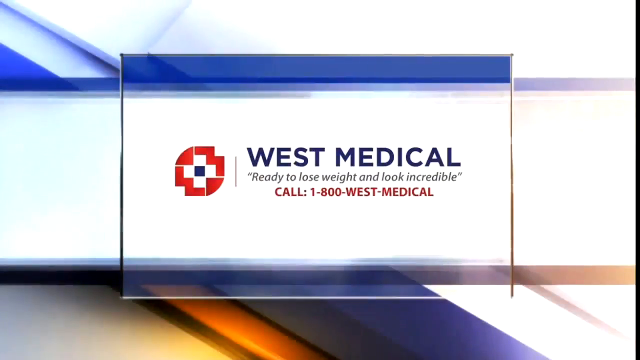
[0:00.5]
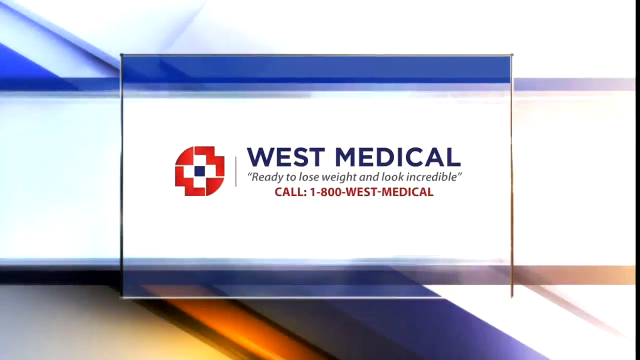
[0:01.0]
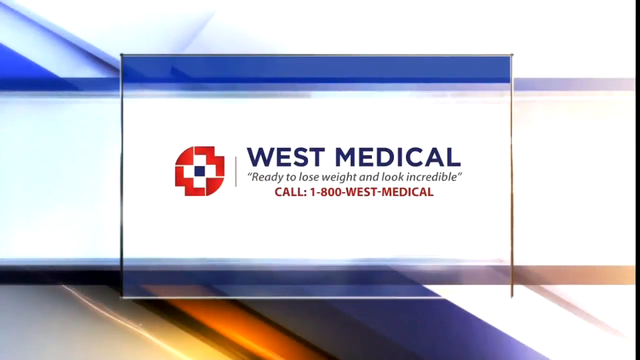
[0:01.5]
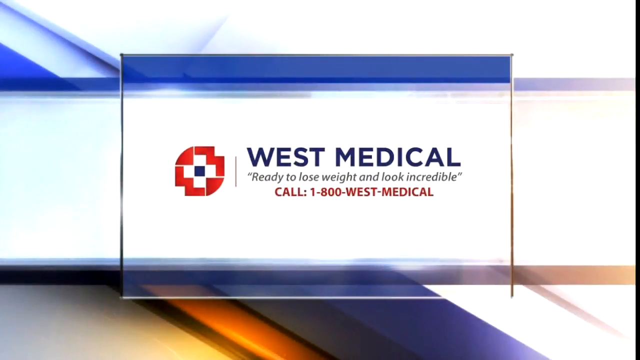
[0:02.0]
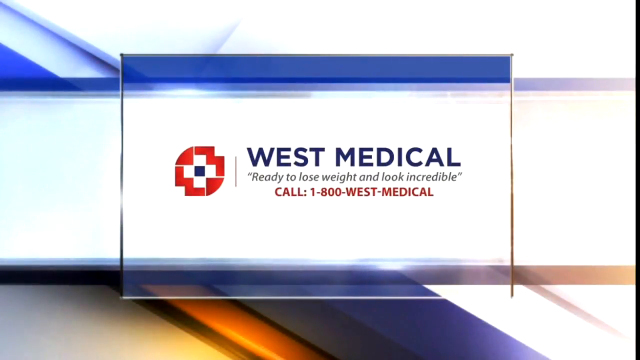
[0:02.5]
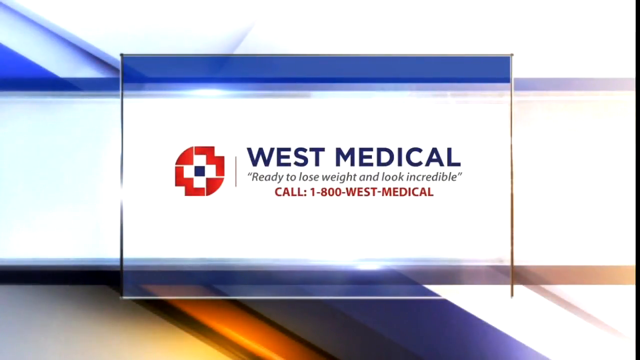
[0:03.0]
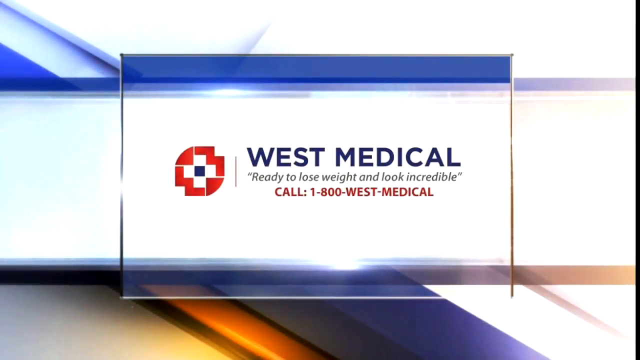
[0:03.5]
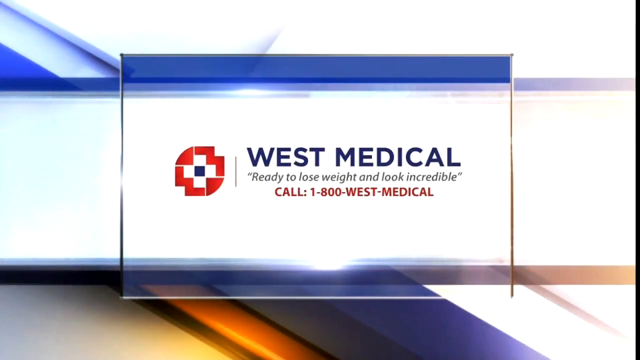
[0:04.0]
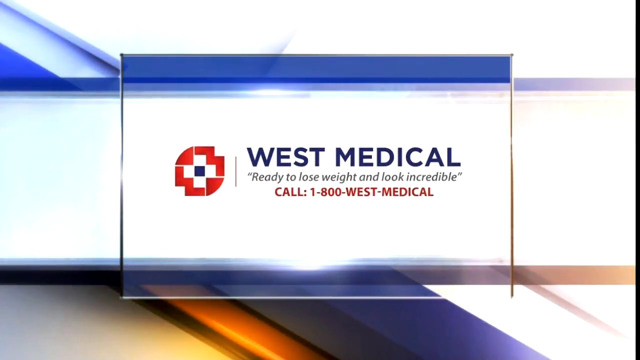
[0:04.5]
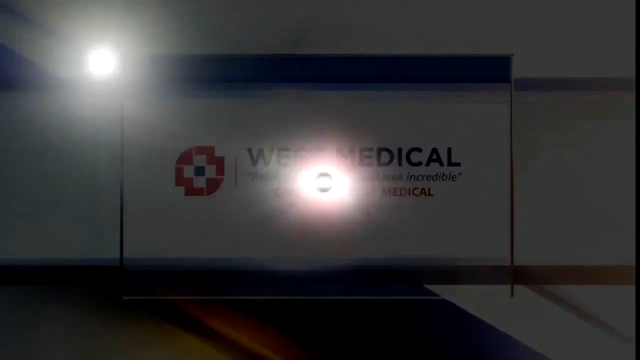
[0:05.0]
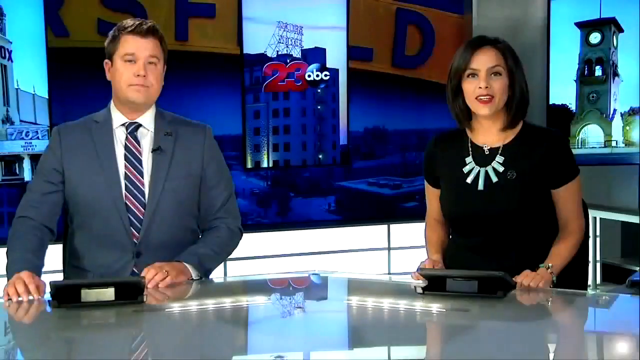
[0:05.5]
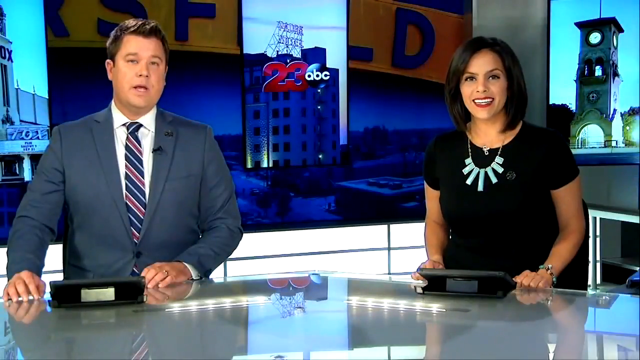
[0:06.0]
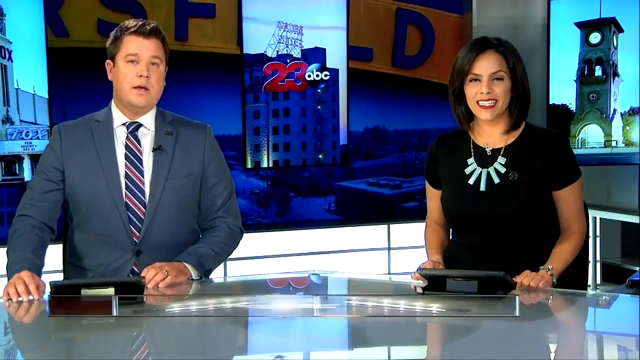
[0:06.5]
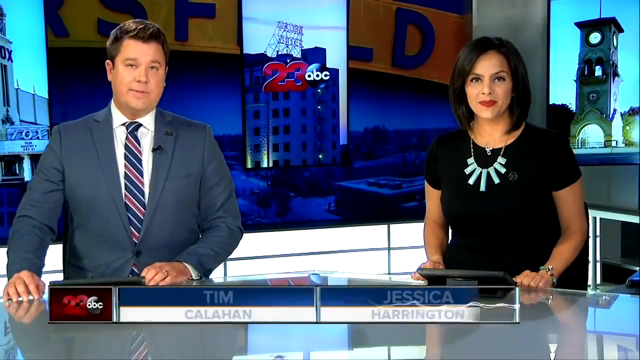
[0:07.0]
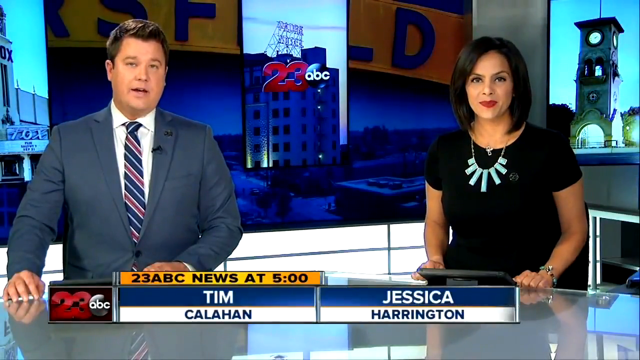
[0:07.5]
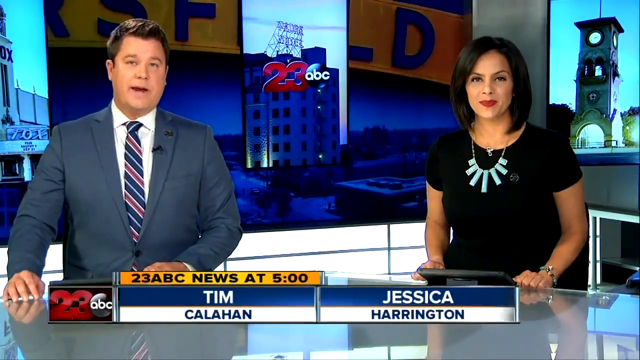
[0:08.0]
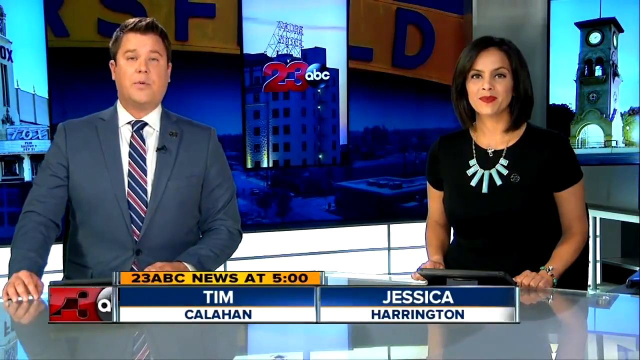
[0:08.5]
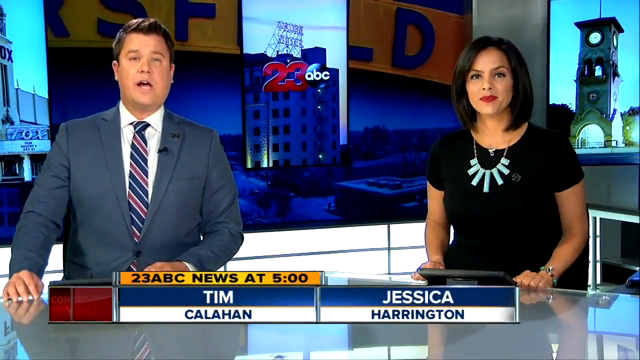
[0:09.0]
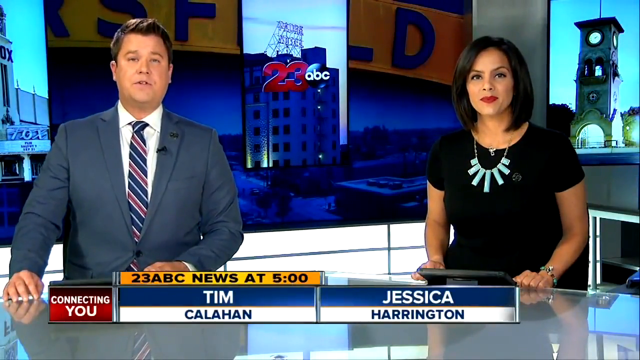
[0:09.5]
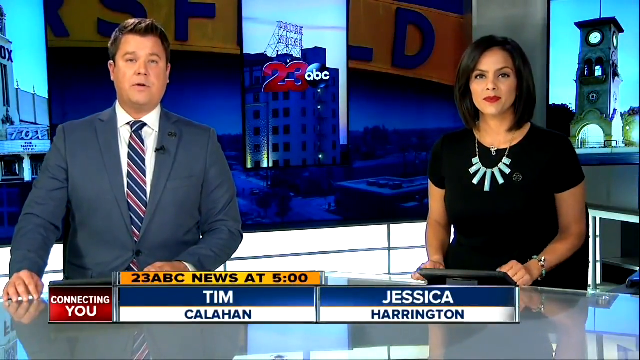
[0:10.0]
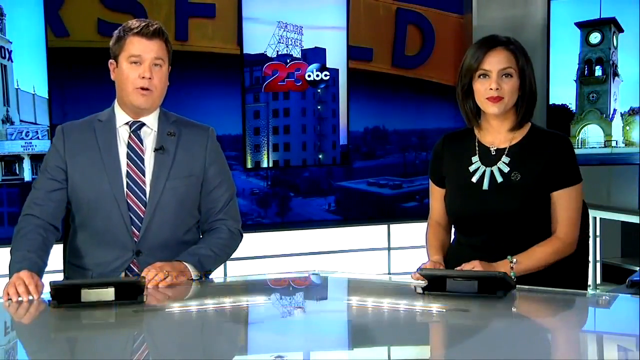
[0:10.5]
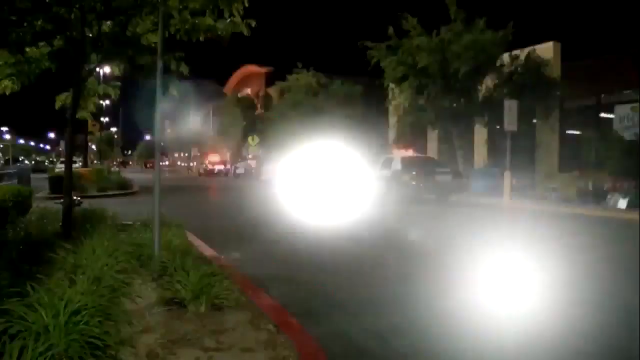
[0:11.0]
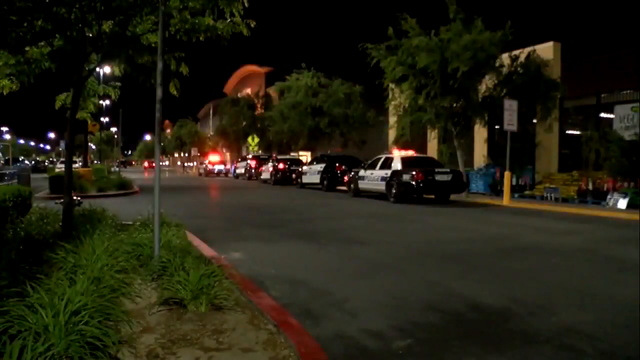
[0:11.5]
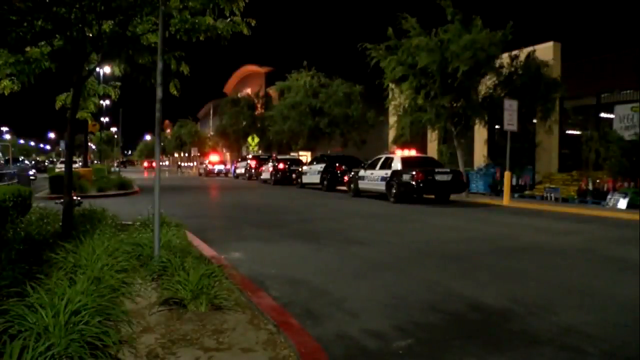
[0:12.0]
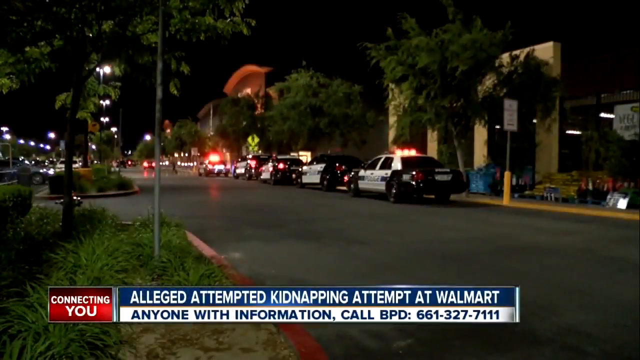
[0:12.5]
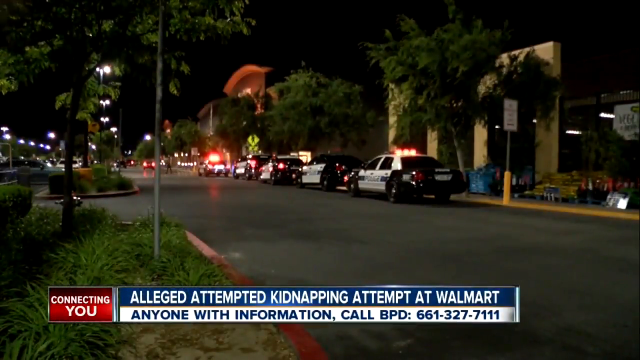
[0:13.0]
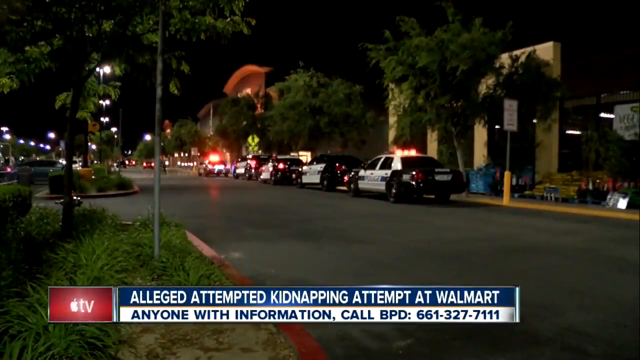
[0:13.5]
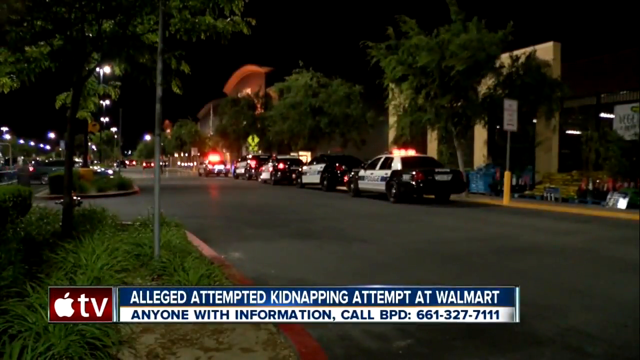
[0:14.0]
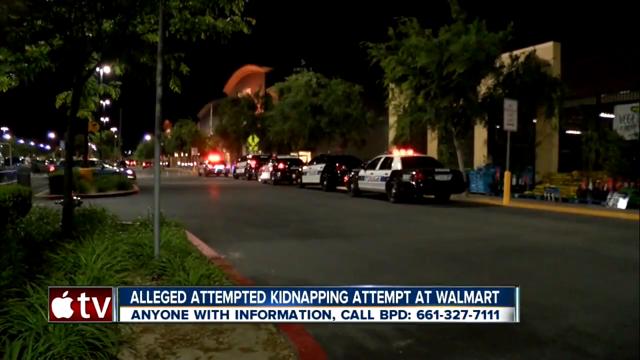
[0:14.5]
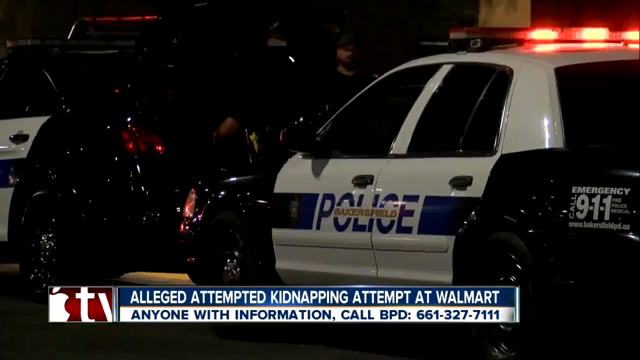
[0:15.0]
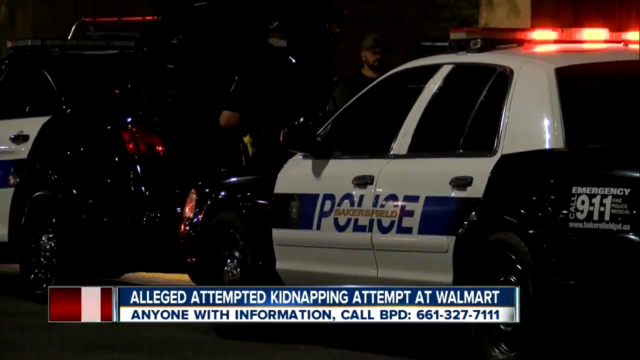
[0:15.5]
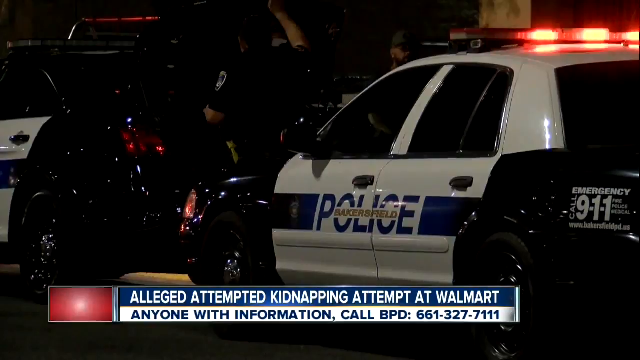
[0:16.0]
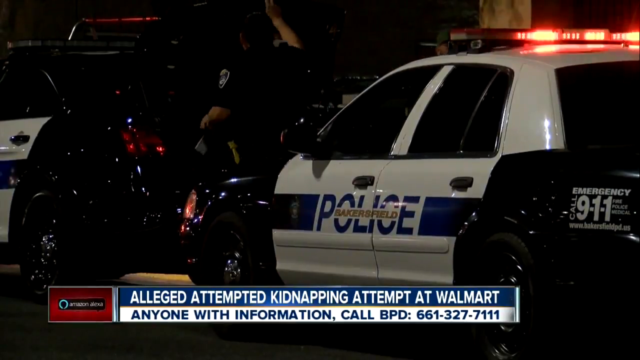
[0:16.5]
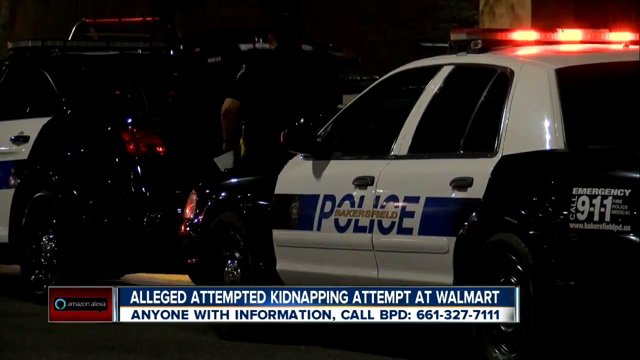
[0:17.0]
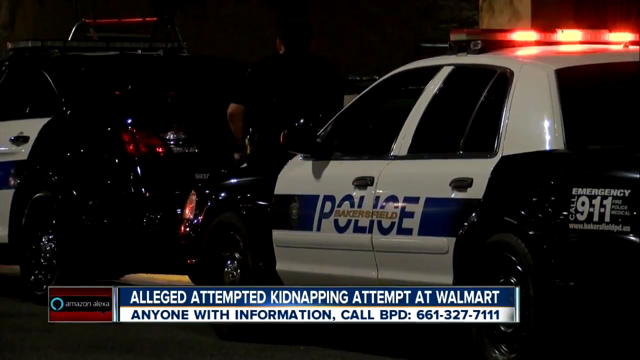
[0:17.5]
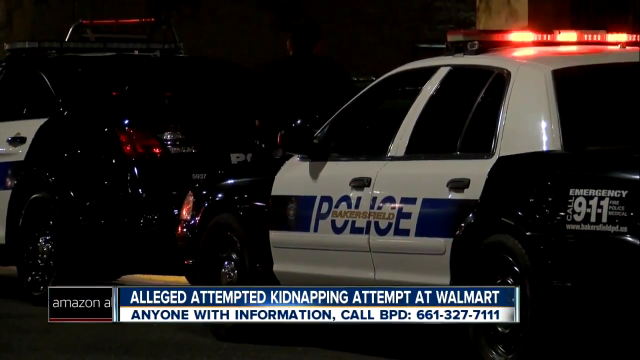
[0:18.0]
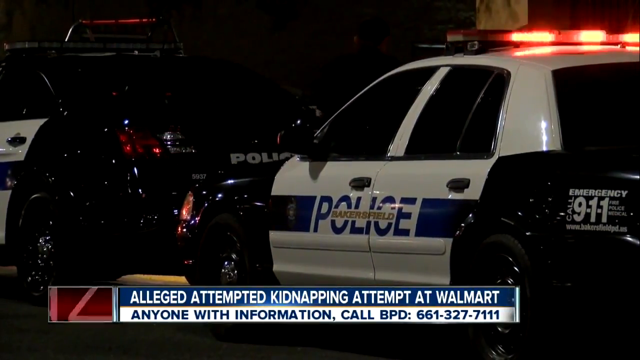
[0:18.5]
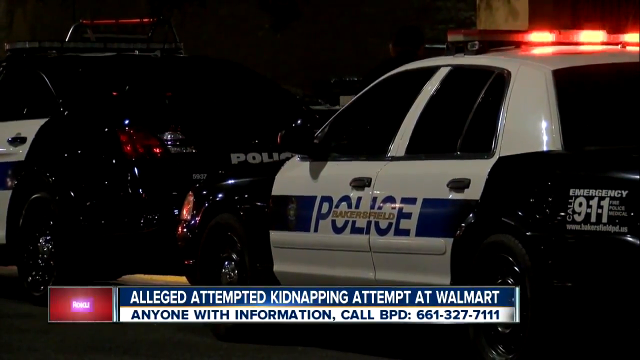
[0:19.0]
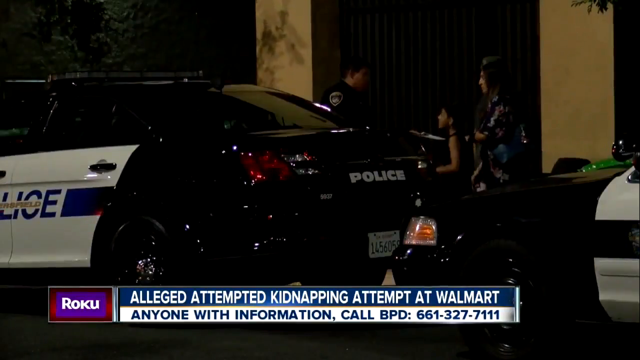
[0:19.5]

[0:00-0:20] The video opens with text reading "West Medical ready to lose weight and look incredible, call 1-800-WEST-MEDICAL." The scene then moves to the ABC 23 newsroom, where two news anchors, a man and a woman, appear. The woman seems to be wearing a black sweater with a slightly gaudy necklace, and the man wears a gray suit with a quite outdated-looking striped tie. The anchors are named Tim Callahan and Jessica Harrington. The broadcast asks for information, giving the BPD number 661-327-7111. Police cars block the streets with all their lights flashing, and one officer goes through his trunk looking for something, though what he is doing is unclear.